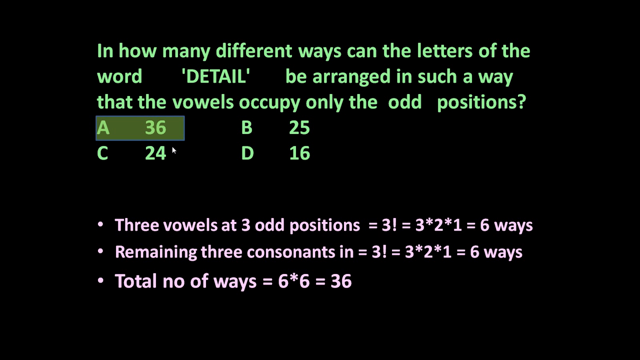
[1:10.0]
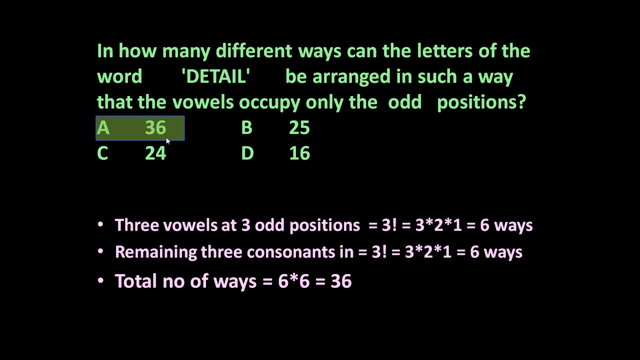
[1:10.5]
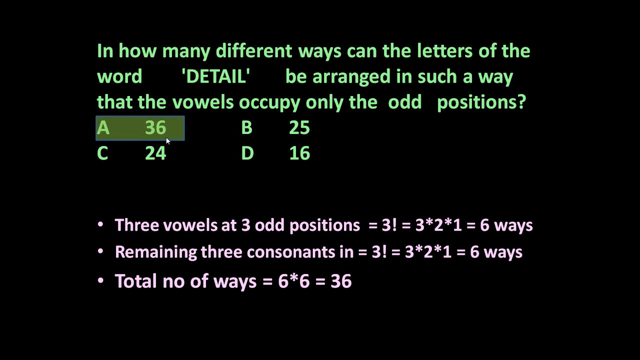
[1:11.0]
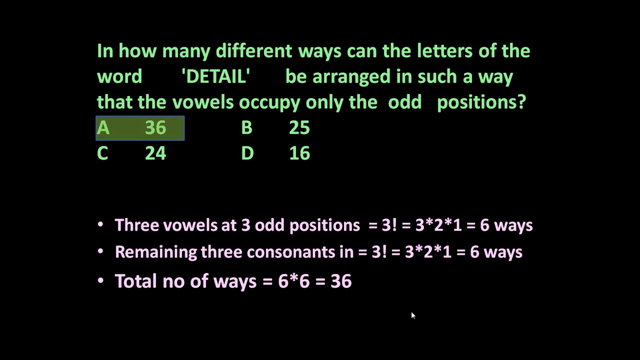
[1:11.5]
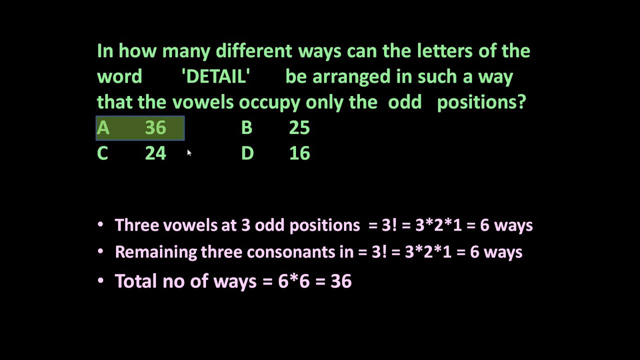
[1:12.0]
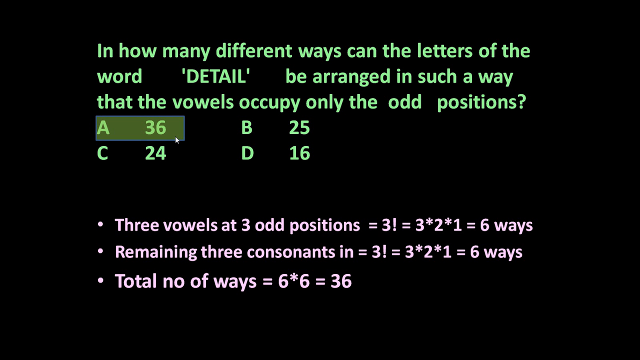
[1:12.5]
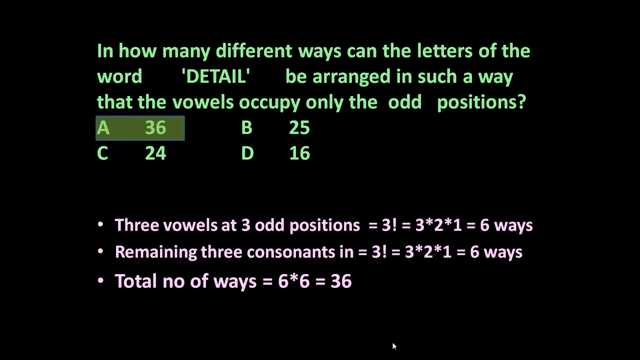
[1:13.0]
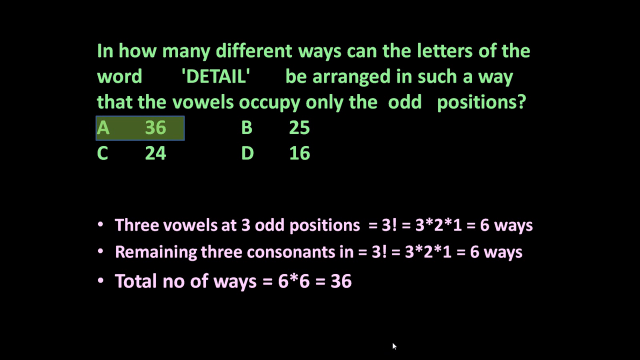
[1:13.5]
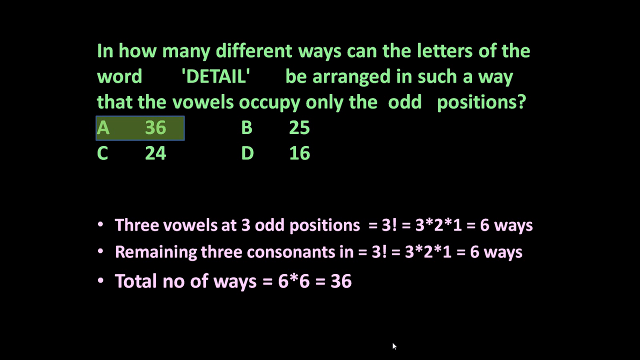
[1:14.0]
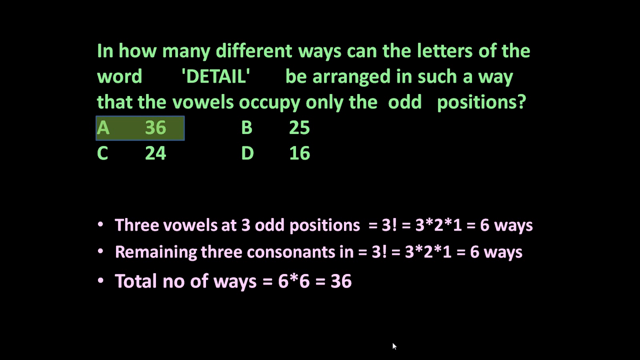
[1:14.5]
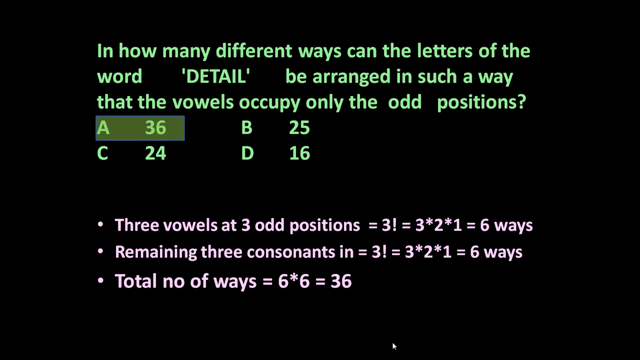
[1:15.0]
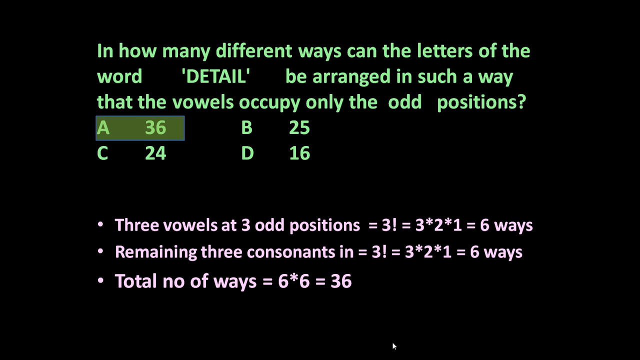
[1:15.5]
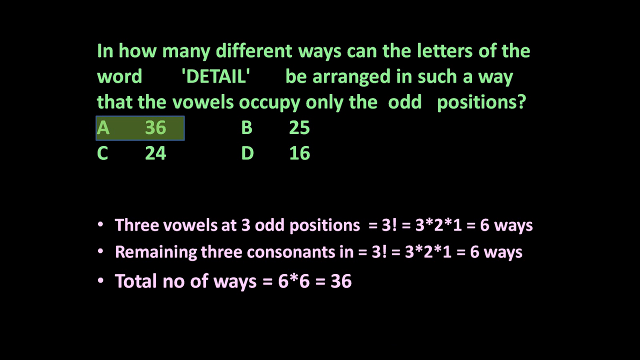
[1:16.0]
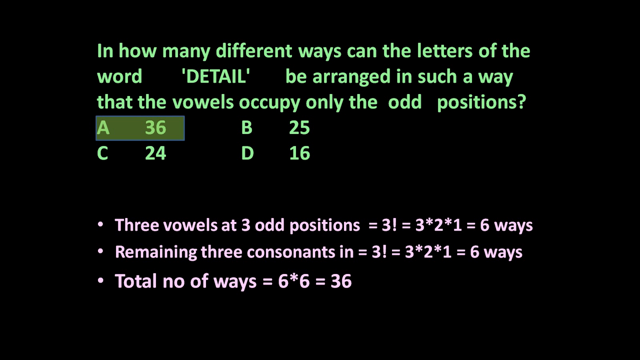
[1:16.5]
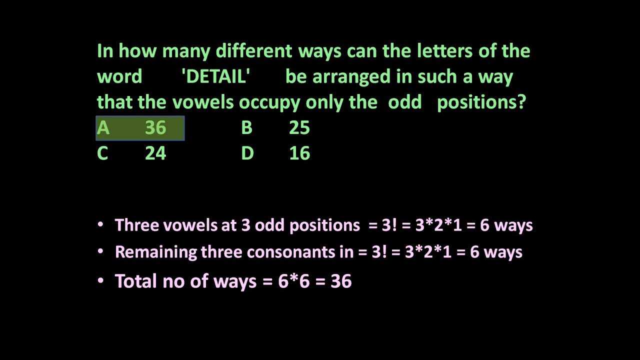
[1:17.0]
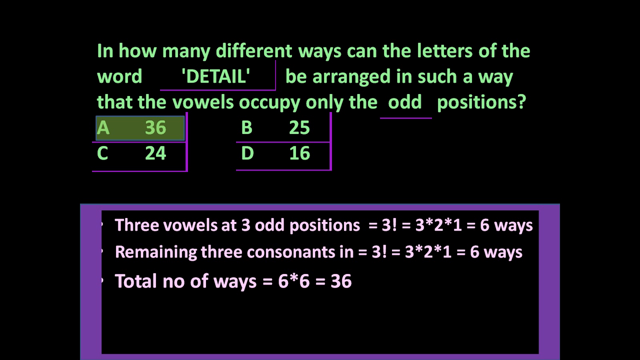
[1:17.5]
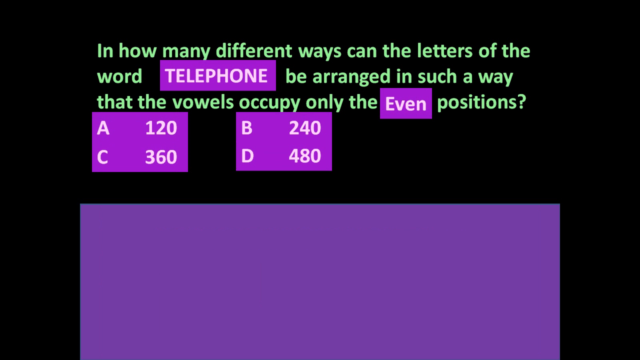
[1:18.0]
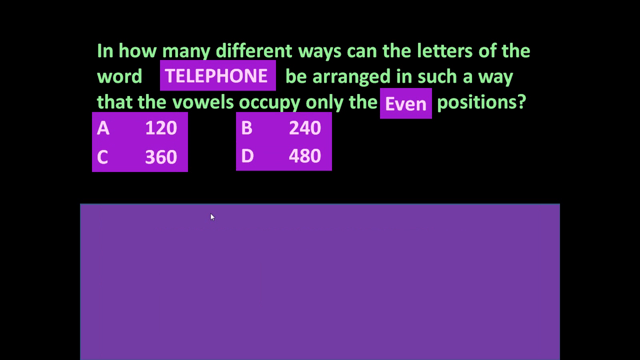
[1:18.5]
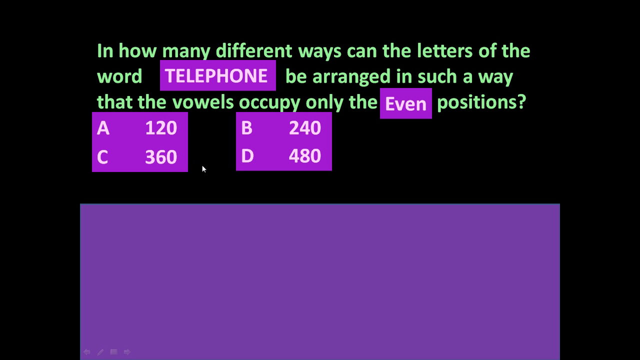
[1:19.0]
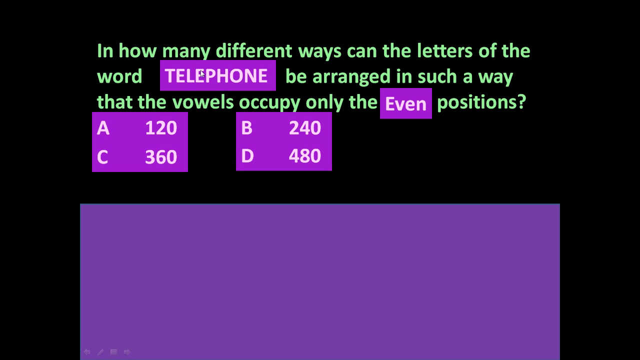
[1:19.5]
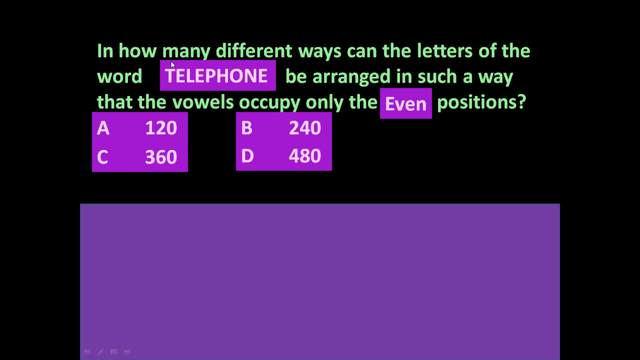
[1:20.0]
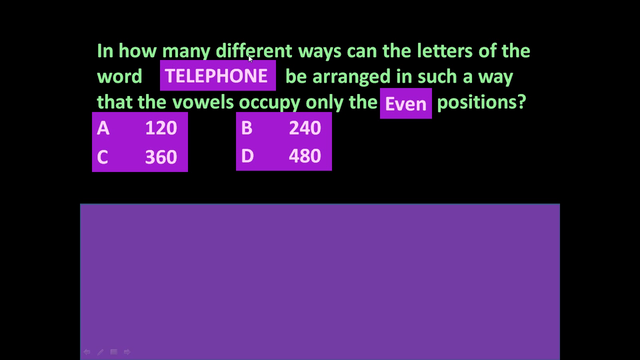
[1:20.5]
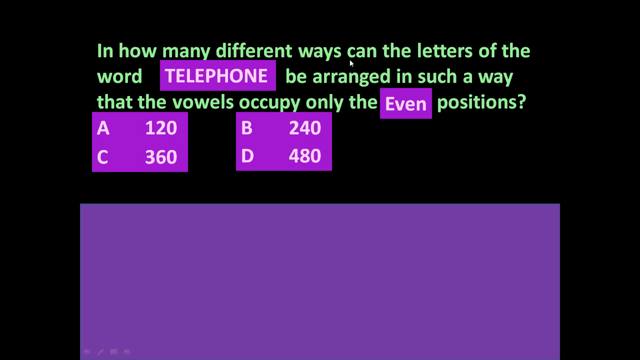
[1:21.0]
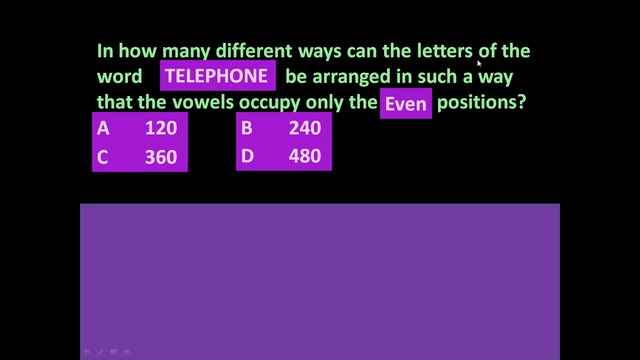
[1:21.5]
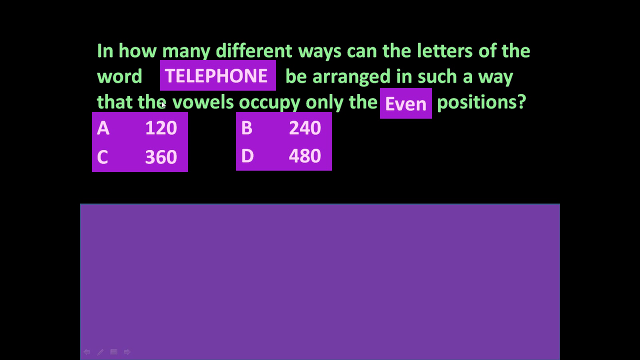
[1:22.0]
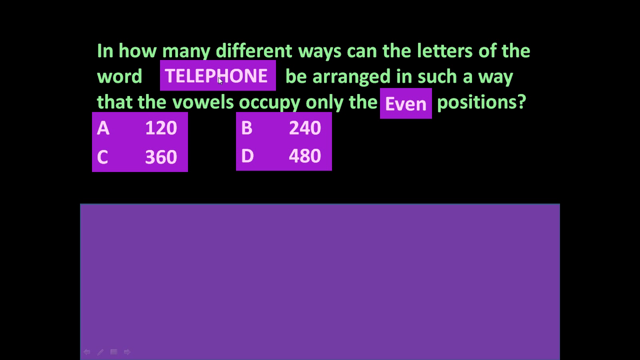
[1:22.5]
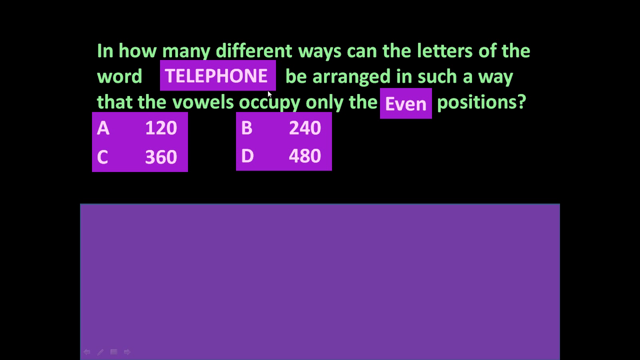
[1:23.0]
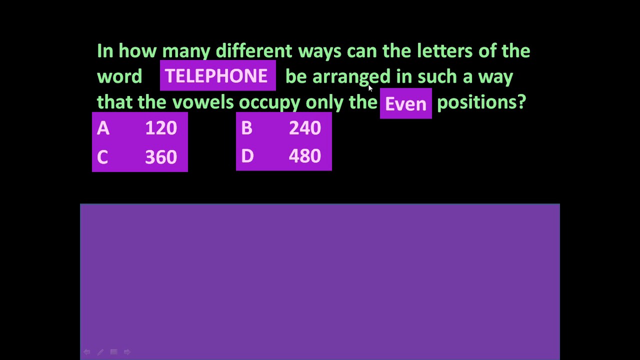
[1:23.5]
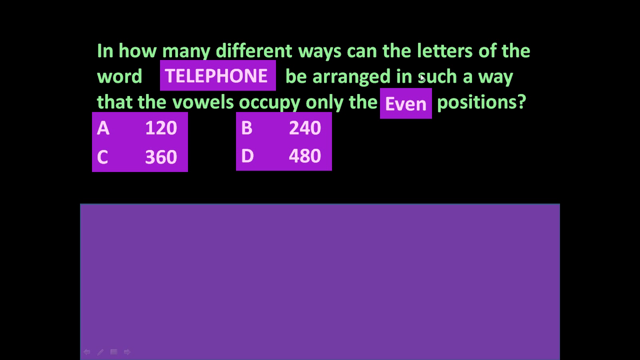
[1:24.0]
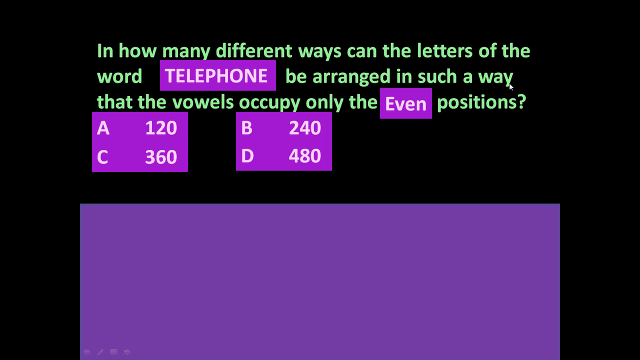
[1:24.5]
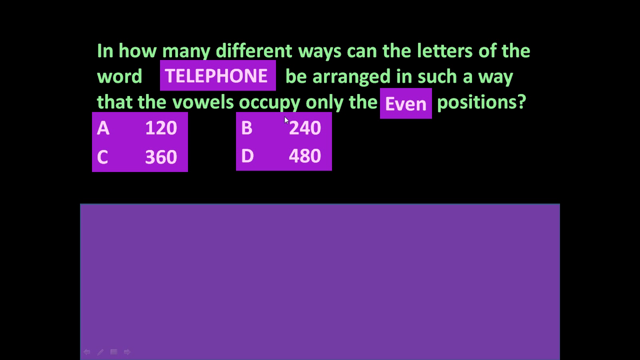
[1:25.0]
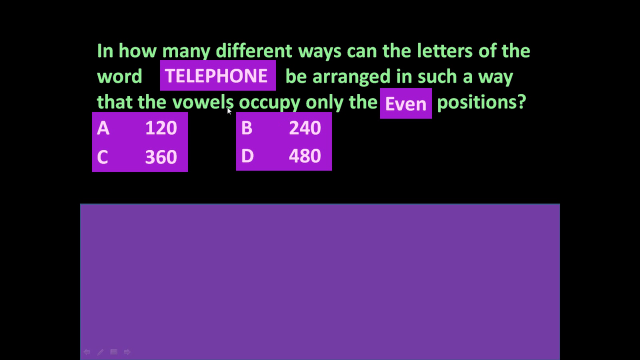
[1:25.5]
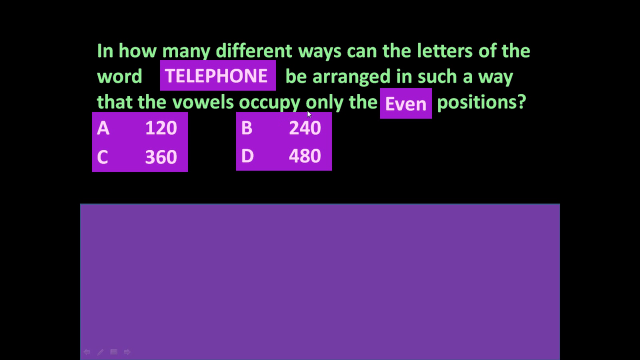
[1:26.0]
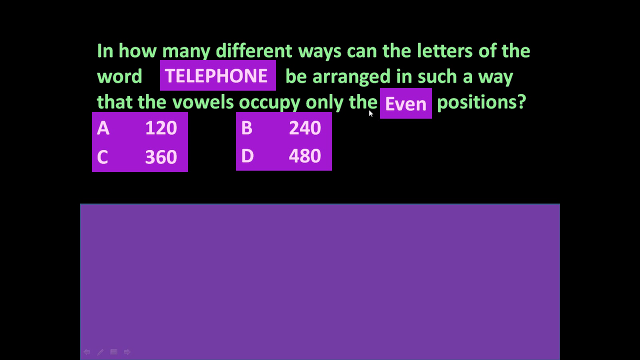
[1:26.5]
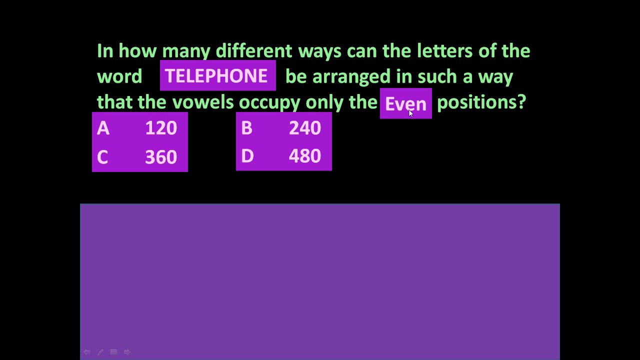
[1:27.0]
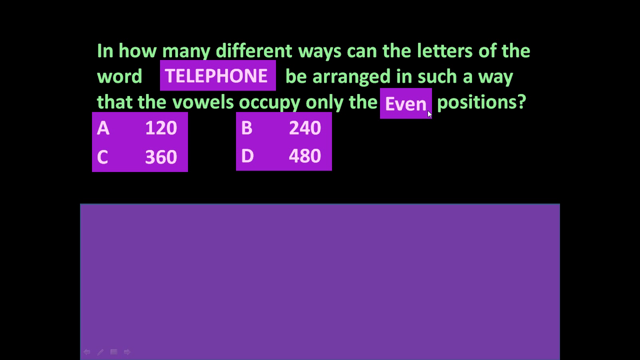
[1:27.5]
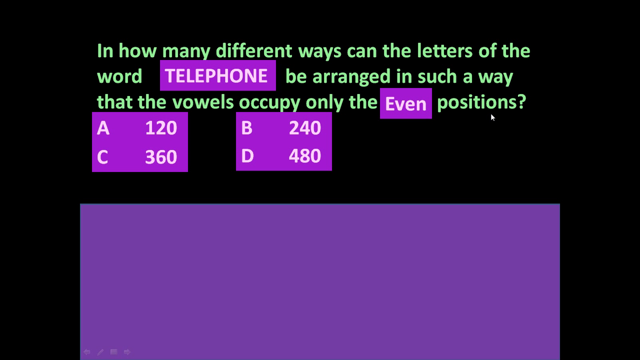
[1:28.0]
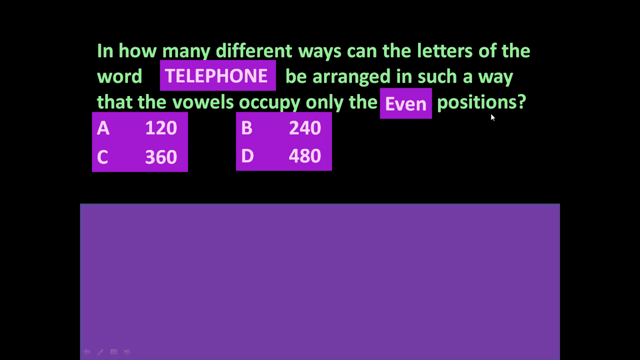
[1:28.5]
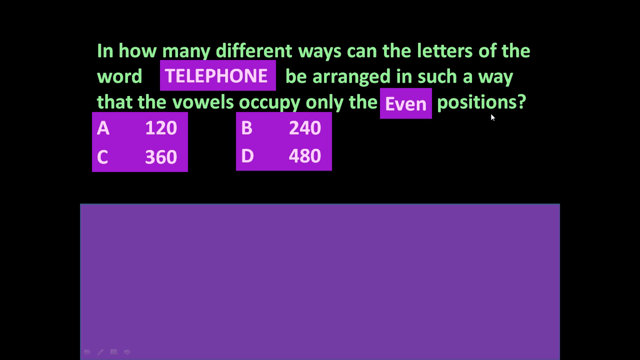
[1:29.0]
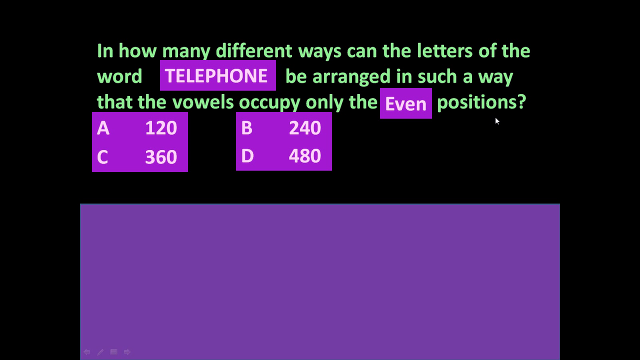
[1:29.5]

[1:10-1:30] The screen shows, in green, "in how many different ways can the letters of the word detail be arranged in such a way that the vowels occupy only the odd positions?" Below, the first line reads "A36, B25" and the second "C24, D16." Below that are three white bullet points: "three vowels at three odd positions equals three! equals three times two times one equals six ways," "remaining three consonants in equals three exclamation point equals three times two times one equals six ways," and "total no of ways equals six times six equals 36." The next screen reads, in green, "in how many different ways can the letters of the word telephone be arranged in such a way that the vowels occupy only the even positions?" Below are two text boxes: the left one reads "A120" with "C360" below it, and the right one reads "B240" with "D480" below it. The words telephone and even are highlighted in purple, as are the two answer boxes. Below them is a smaller purple rectangle.